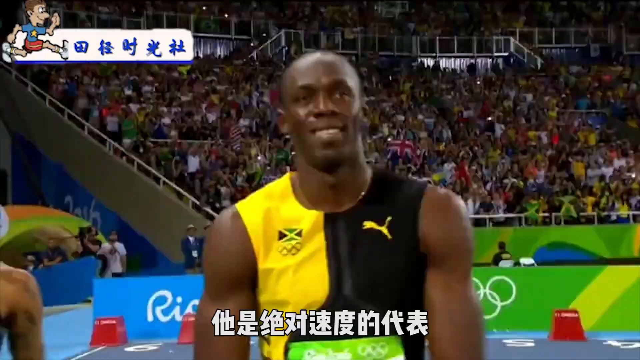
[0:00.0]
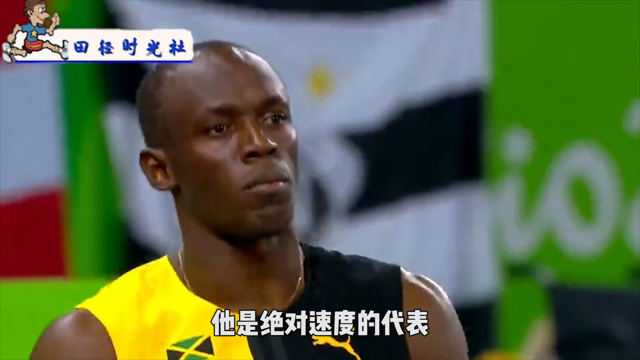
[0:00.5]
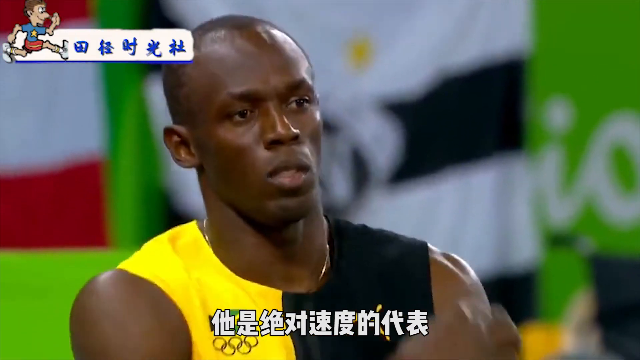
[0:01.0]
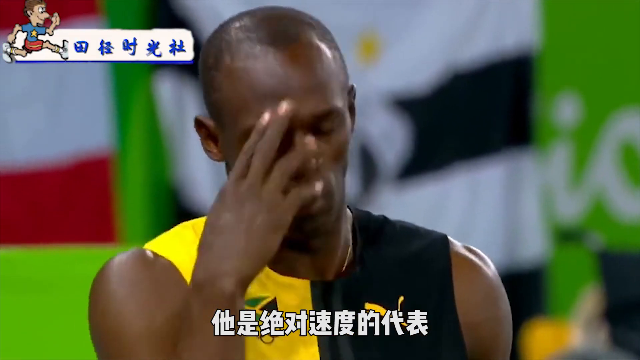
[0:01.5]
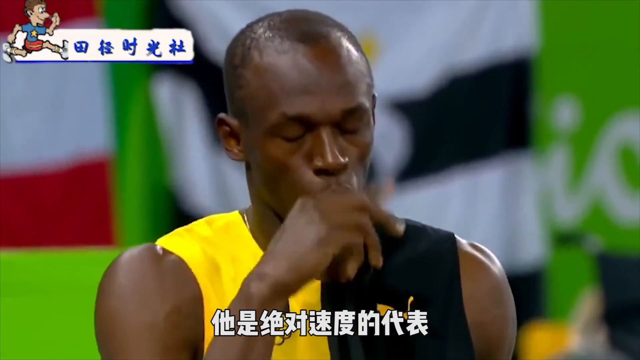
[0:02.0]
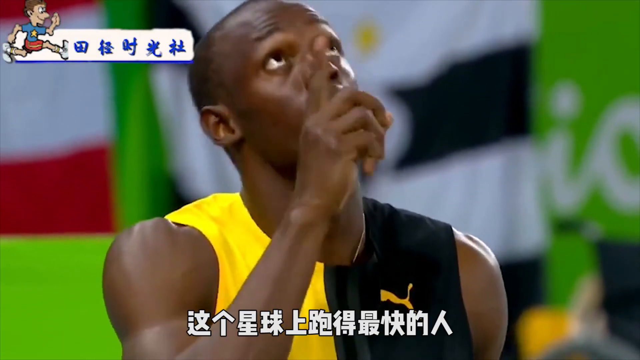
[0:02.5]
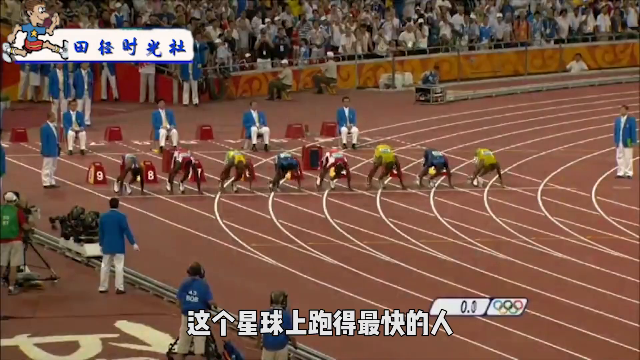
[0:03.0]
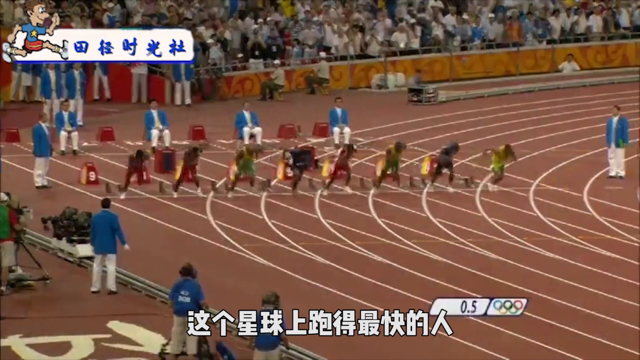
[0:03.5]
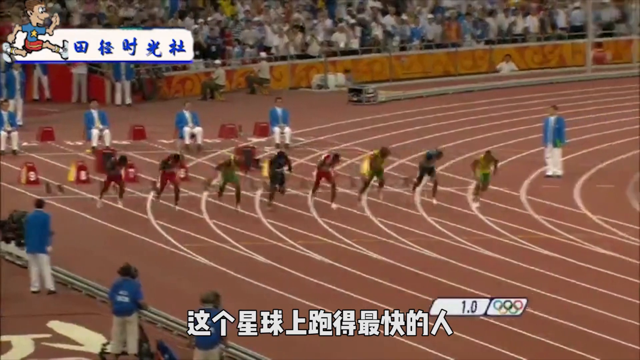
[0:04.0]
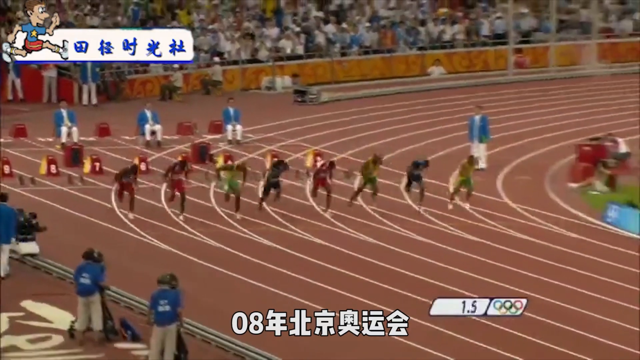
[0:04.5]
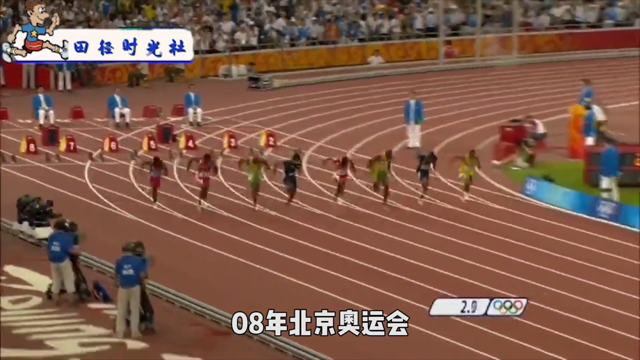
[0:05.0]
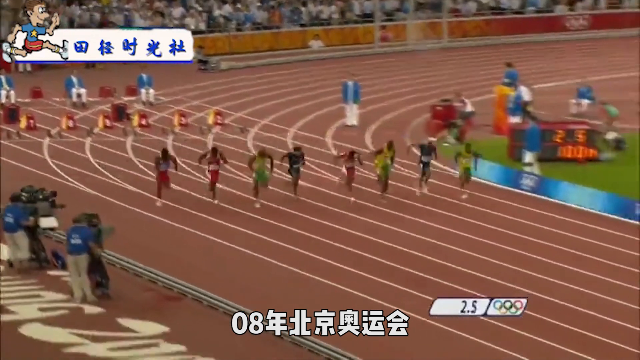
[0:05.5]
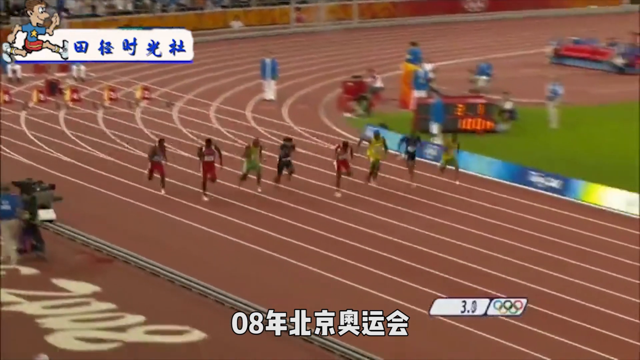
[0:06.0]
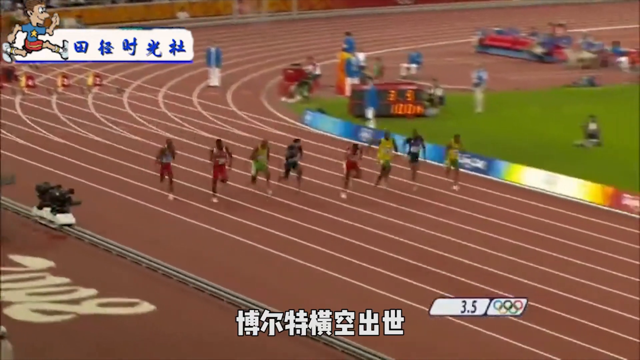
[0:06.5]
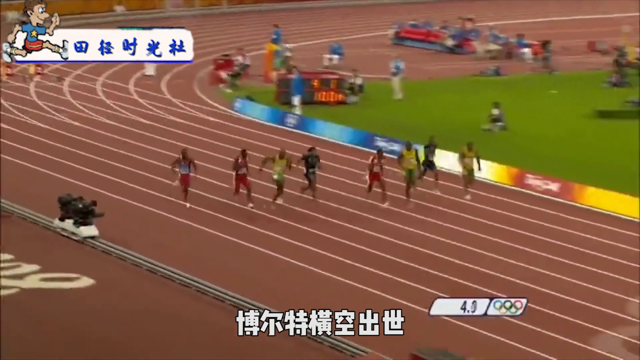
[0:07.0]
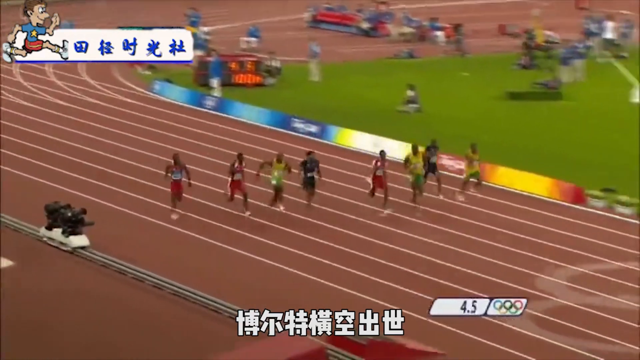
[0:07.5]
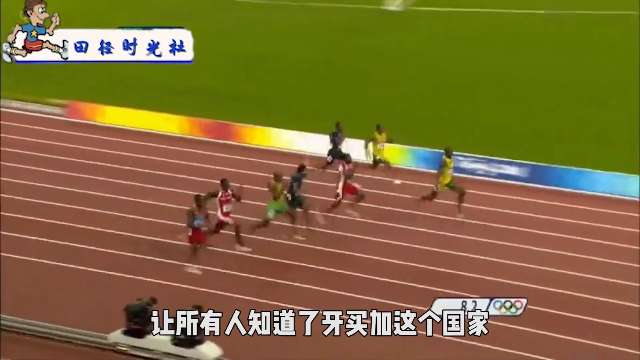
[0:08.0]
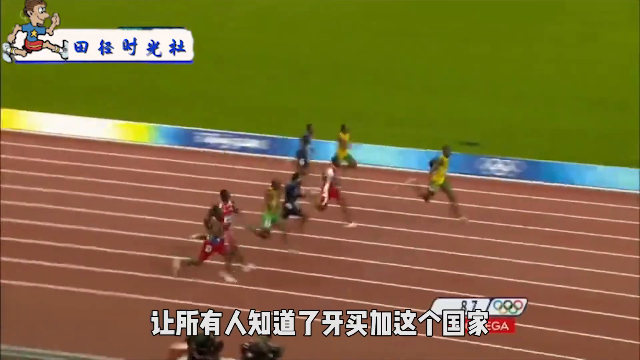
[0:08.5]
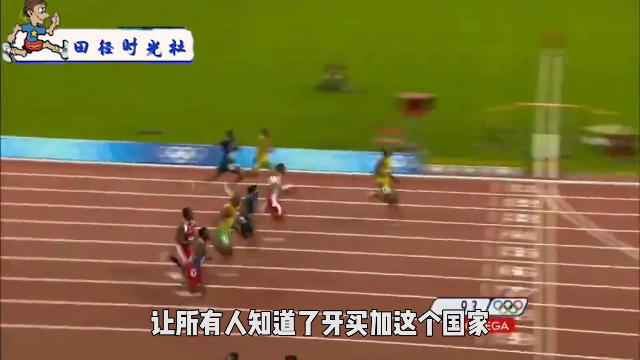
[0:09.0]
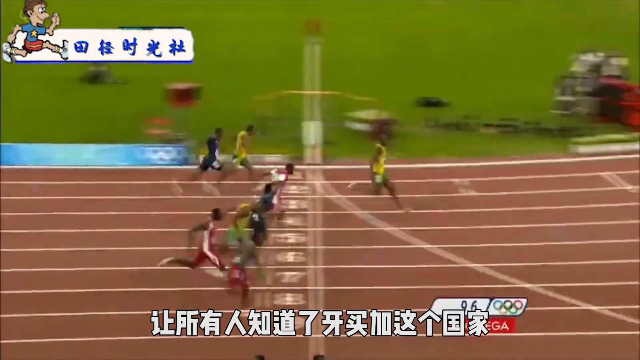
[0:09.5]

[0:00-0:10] An athlete appears in a frozen frame; his name and country are not identifiable. It looks to be an indoor field event, most likely a sprint and most likely the 100 meter sprint. Eight contestants then burst out and sprint the distance. It is hard to tell who won, but the winner finishes a substantial distance ahead, some five yards in front of the competition.